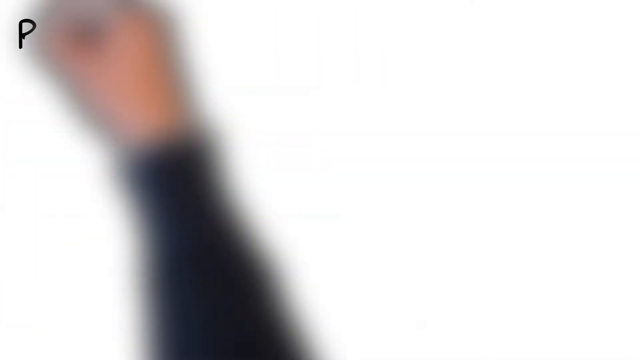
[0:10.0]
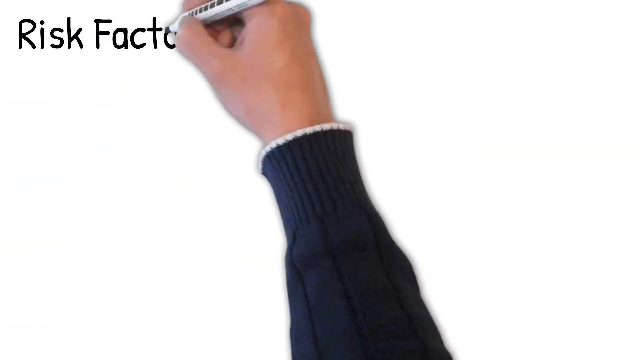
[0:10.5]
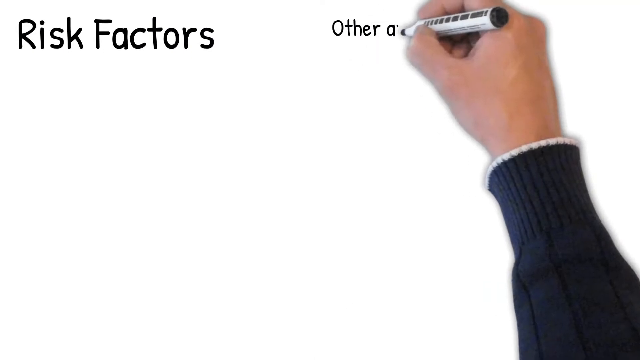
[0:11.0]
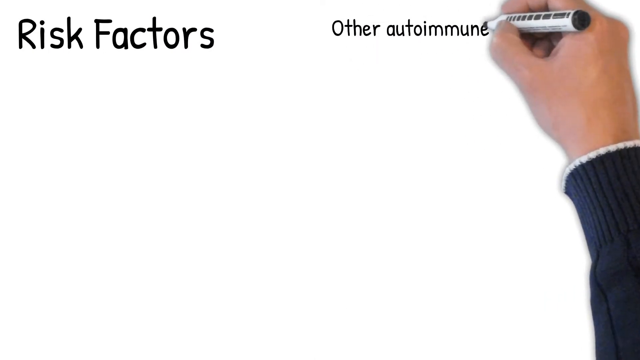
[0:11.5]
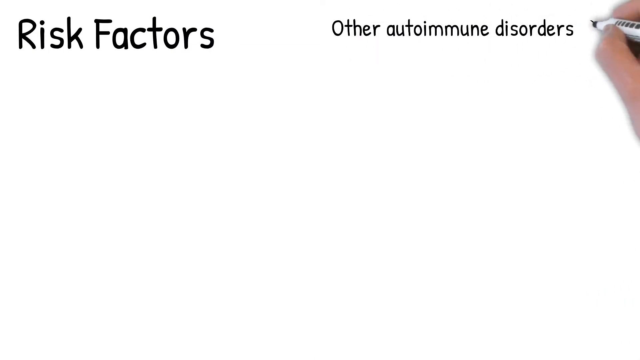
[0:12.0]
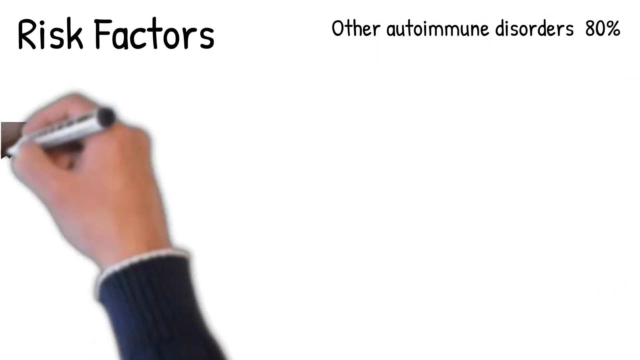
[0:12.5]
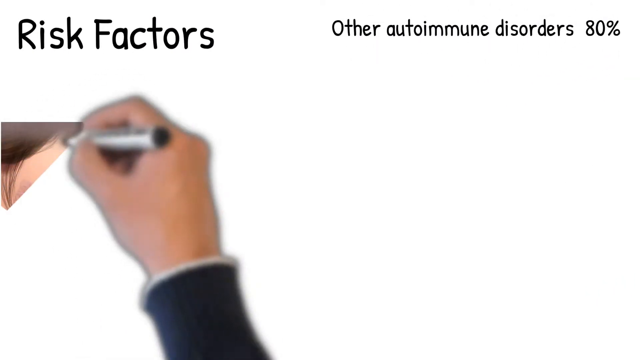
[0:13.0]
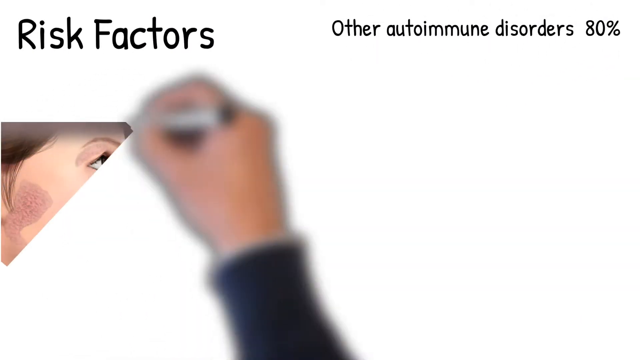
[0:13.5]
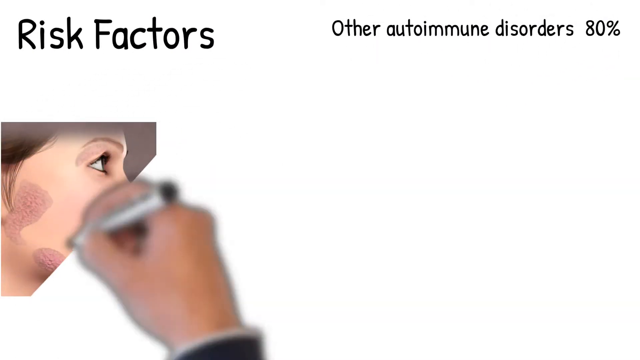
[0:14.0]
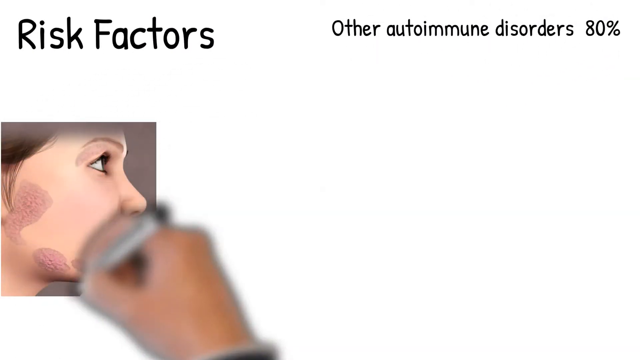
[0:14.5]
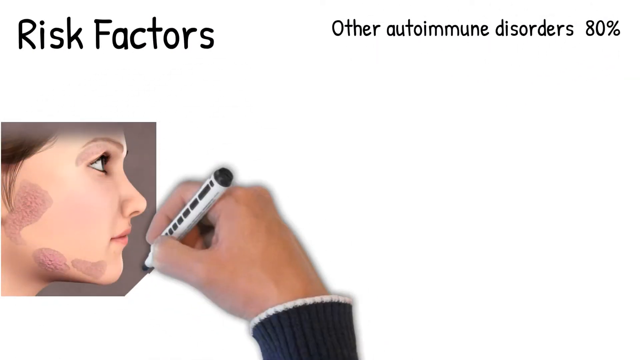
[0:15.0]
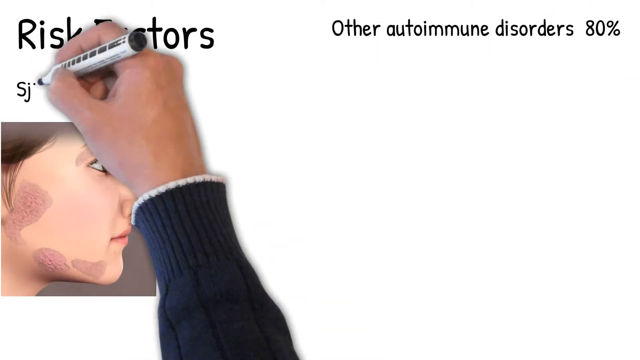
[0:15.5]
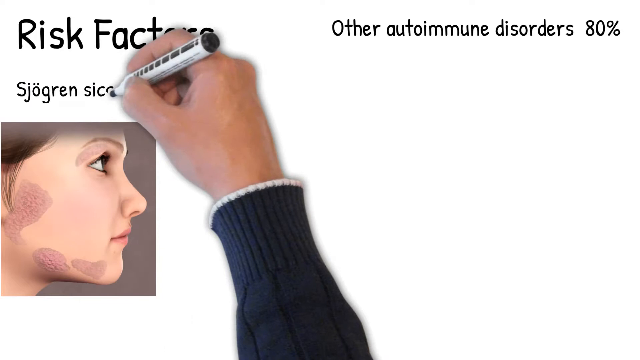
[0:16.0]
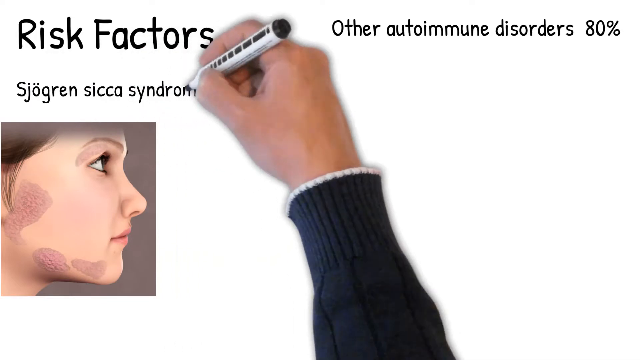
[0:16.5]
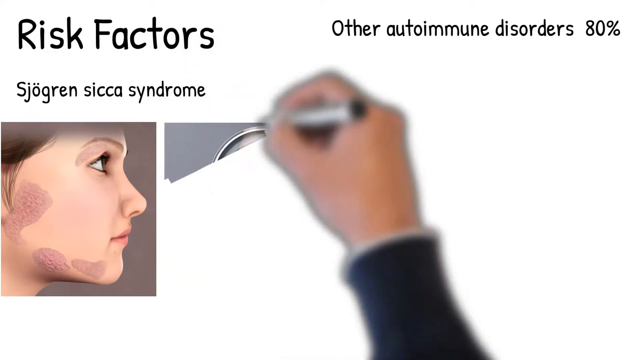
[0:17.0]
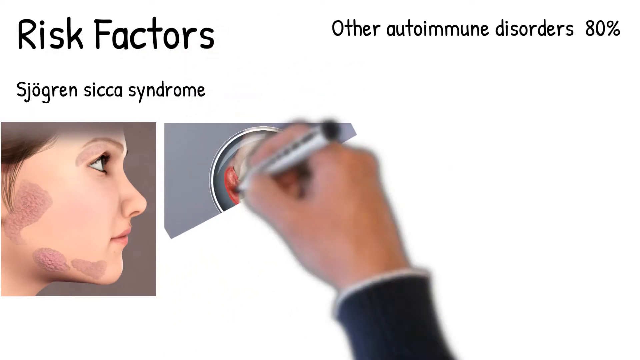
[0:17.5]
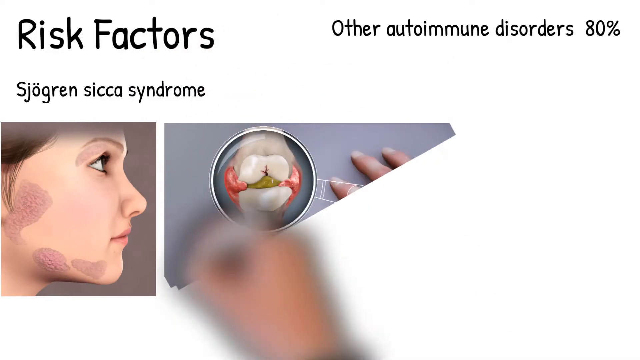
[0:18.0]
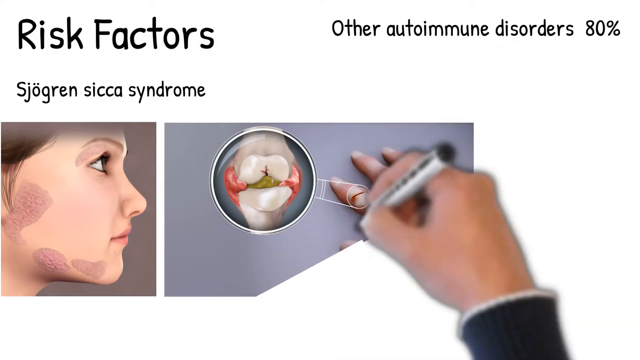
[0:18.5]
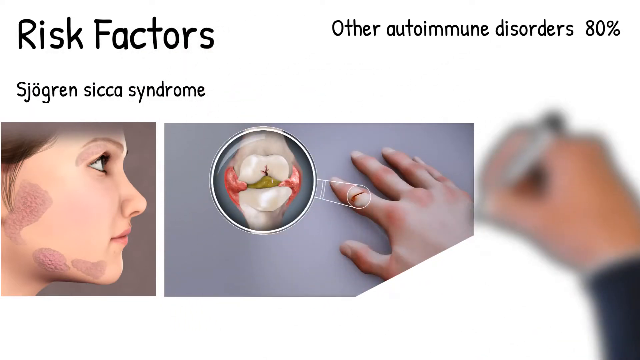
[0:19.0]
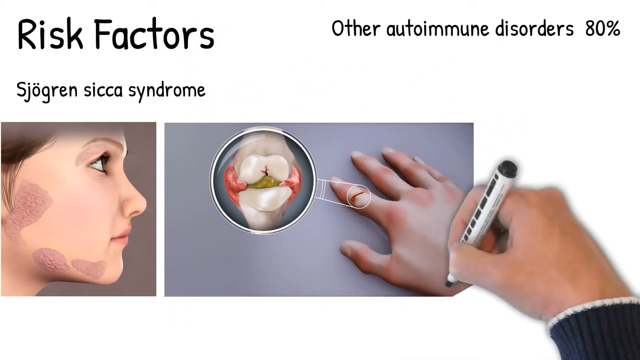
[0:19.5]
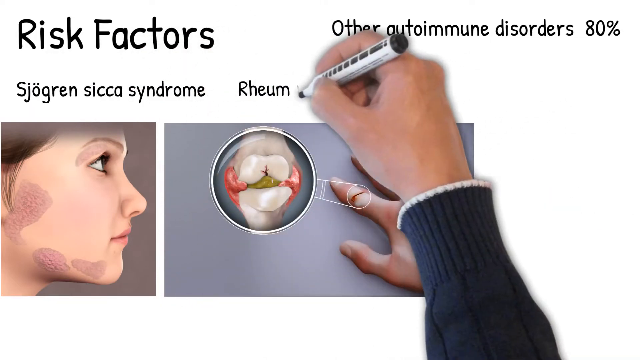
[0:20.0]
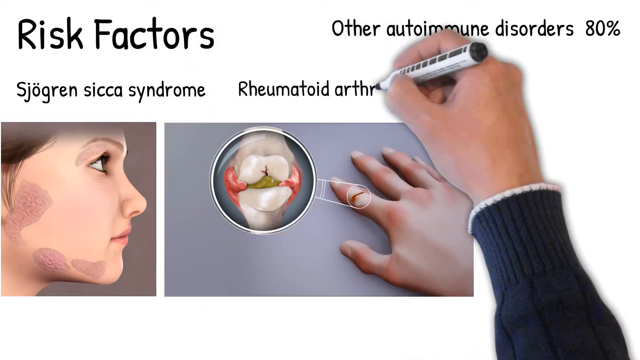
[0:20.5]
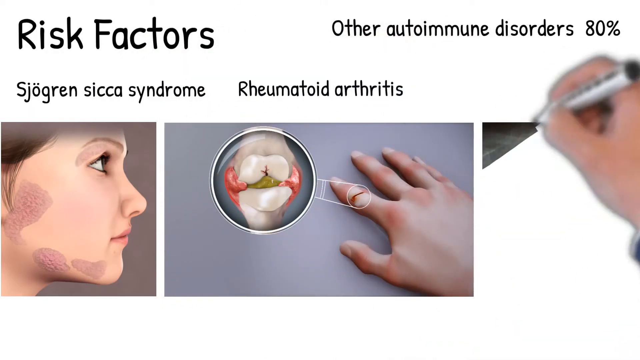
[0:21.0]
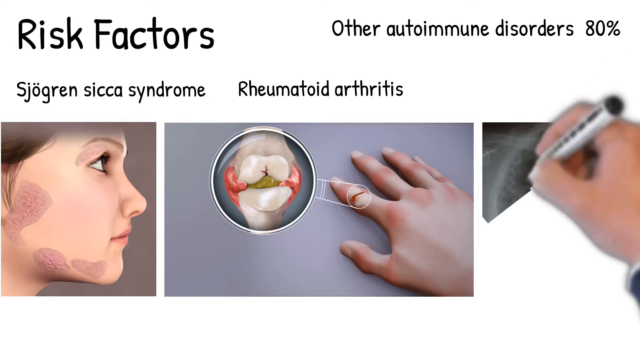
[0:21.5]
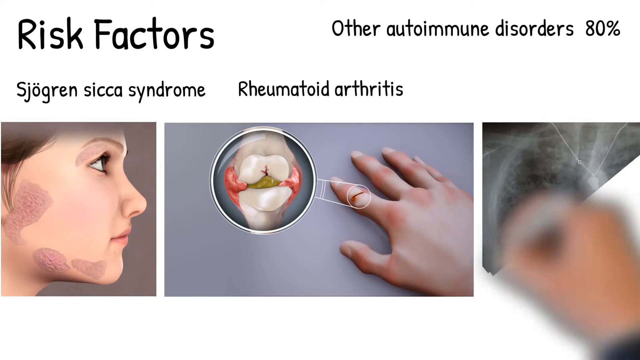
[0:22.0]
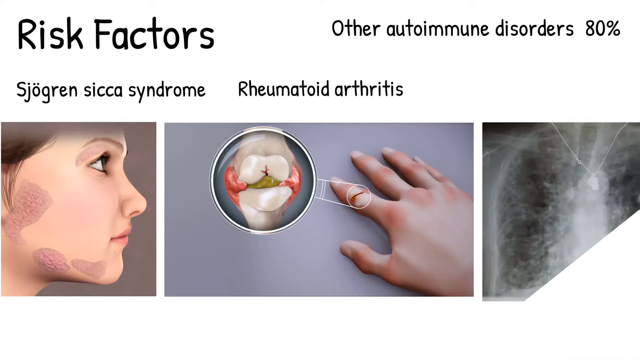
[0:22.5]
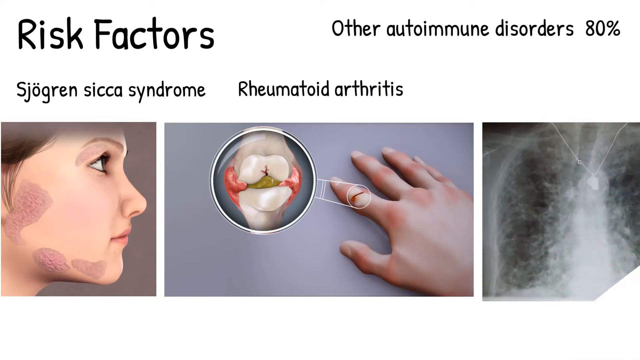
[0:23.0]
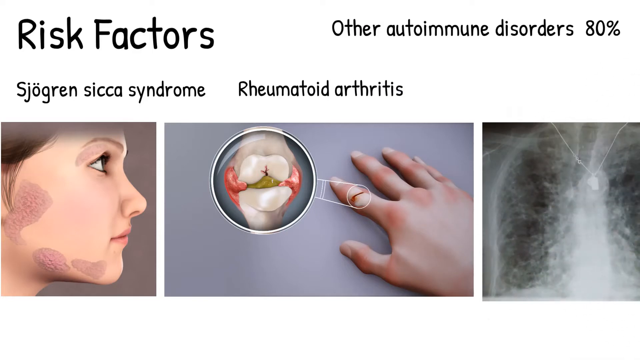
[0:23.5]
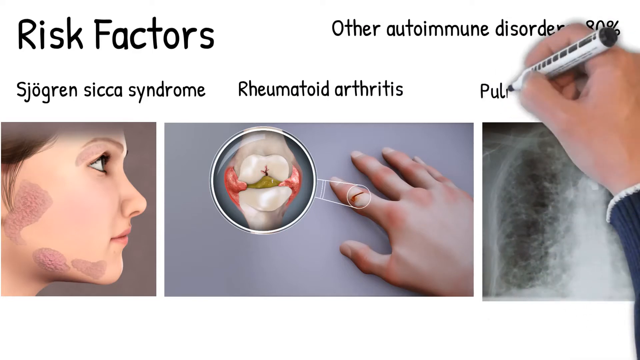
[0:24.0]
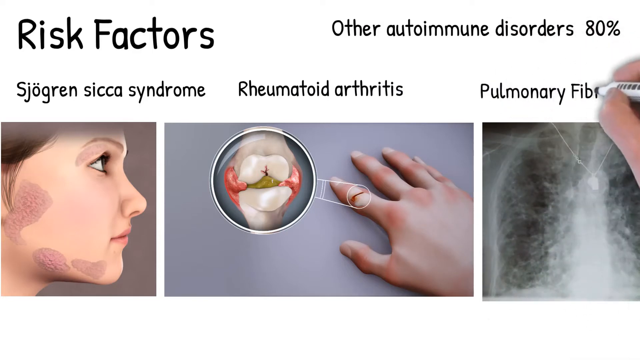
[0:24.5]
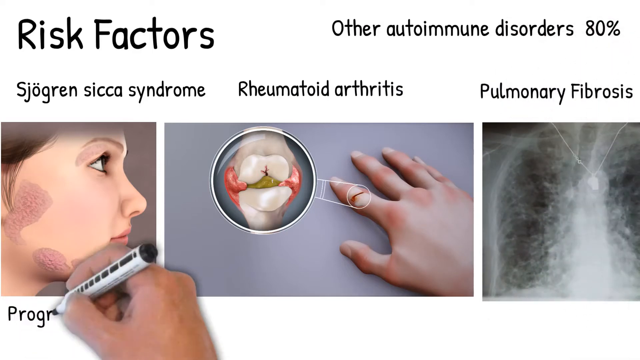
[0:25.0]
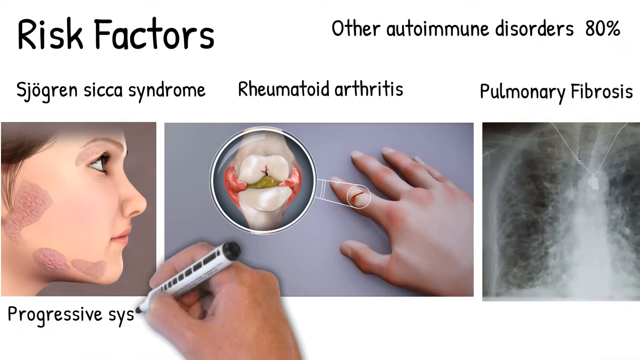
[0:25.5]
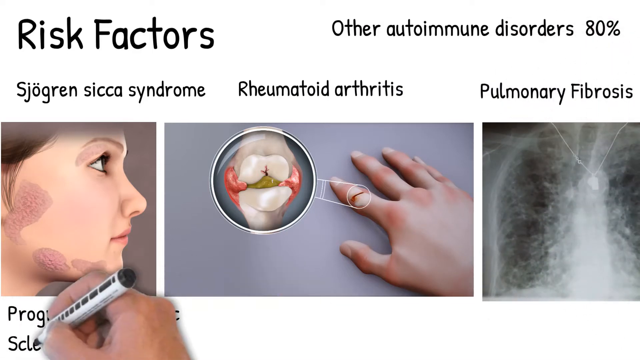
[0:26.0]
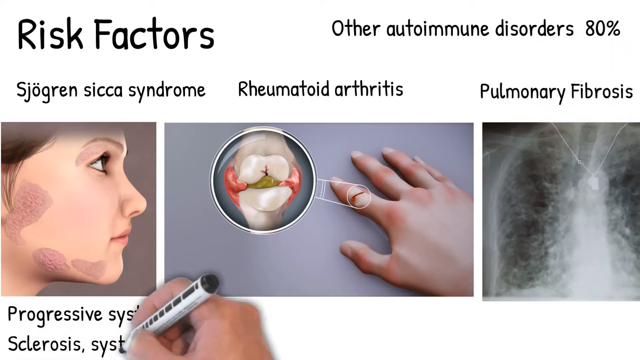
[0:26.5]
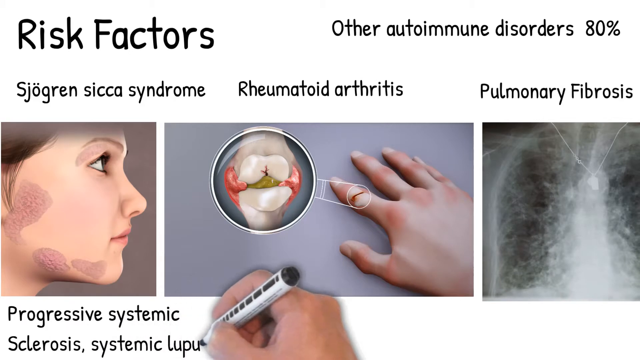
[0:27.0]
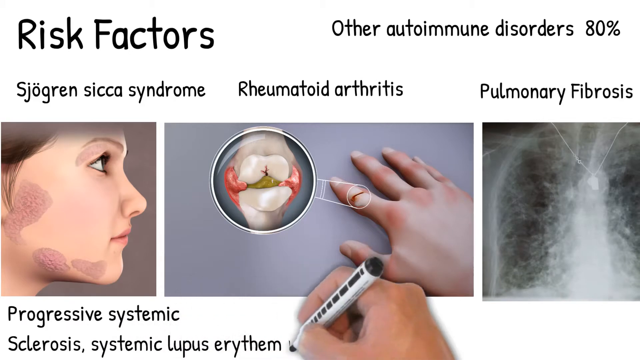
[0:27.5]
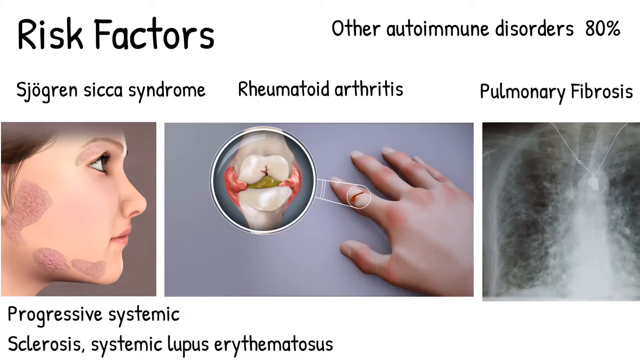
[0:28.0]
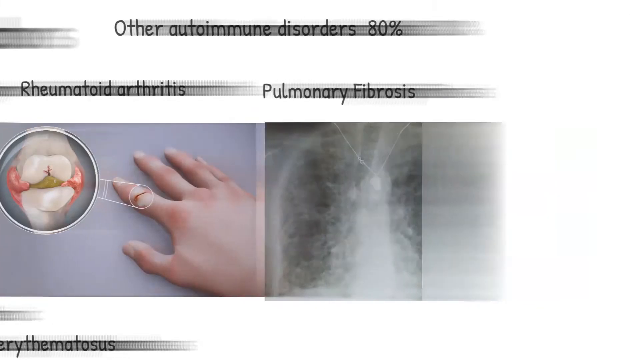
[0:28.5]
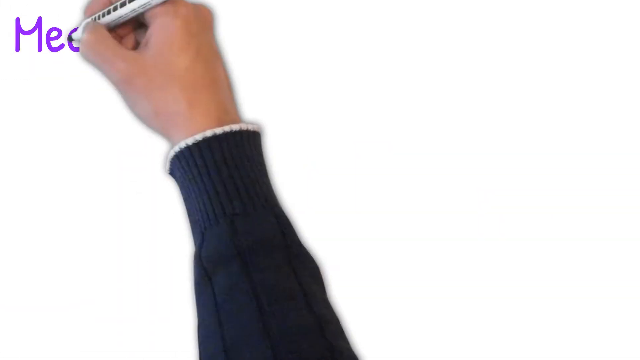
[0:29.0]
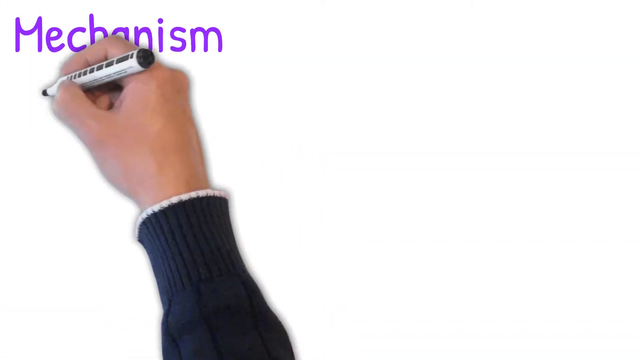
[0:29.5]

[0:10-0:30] The hand writes on the white background. Across the top at the left, black text reads "risk factors", and to its right, in black, "other autoimmune disorders, 80%". On the left side of the screen the hand draws the face of a Caucasian female, shown from the right side of her face, looking up and forward toward the right side of the image. Her light brown hair is just visible. She has approximately three patches on her face, along her lower right jawline and just in front of her ear, that look similar to eczema patches. Above her, the text reads "Sjogren's Sickness Syndrome". To her right, the hand draws a Caucasian right hand with a circle around the middle knuckle of the index finger, enlarged to the left to show an inflamed joint: the bones are white, the joint tissue on either side is pink, and a green-brown tissue in the center of the joint looks to be inflamed. Above it, black text reads "Rheumatoid Arthritis". To the right of that, the hand draws an x-ray of a pair of lungs; the person in the x-ray is wearing a thin chain necklace with a small pendant in front resting basically directly on the sternum. Above the x-ray, black text reads "Pulmonary Fibrosis". Beneath "Sjogren's Sickness Syndrome", at the bottom left, the hand writes "Progressive Systemic Sclerosis" in black. The image moves on, and the hand writes "Mechanism" in purple in the top left corner. The drawing hand is the right hand of a Caucasian male in a gray sweater with a bit of white fringe at the very edge of the sleeve, holding a black and white marker. He is apparently drawing very quickly; the marker never changes, but the drawings appear in different colors, and they are quick.